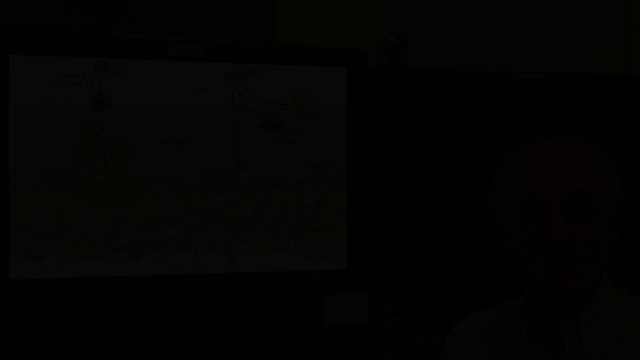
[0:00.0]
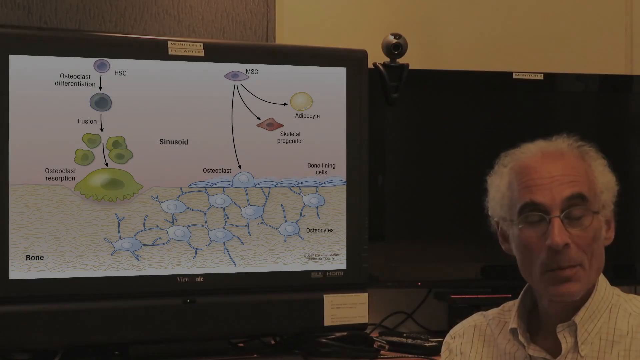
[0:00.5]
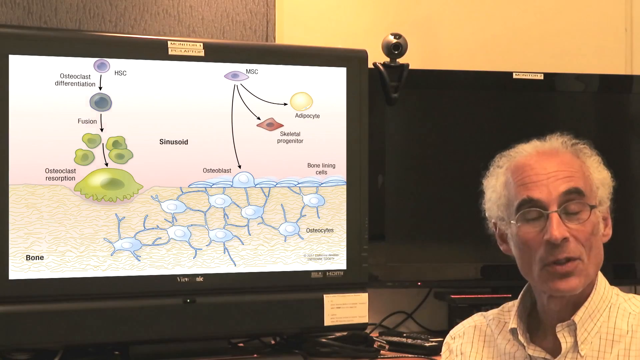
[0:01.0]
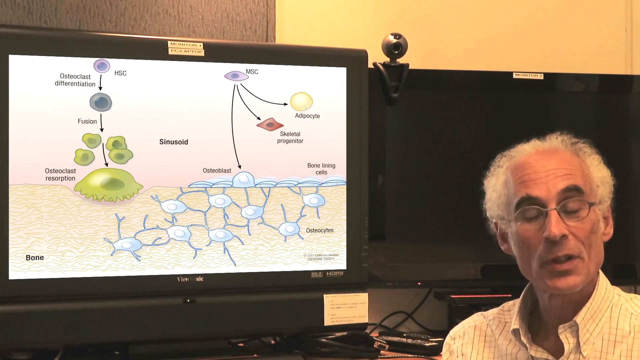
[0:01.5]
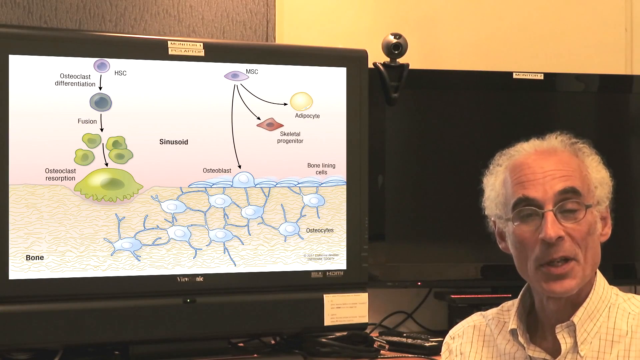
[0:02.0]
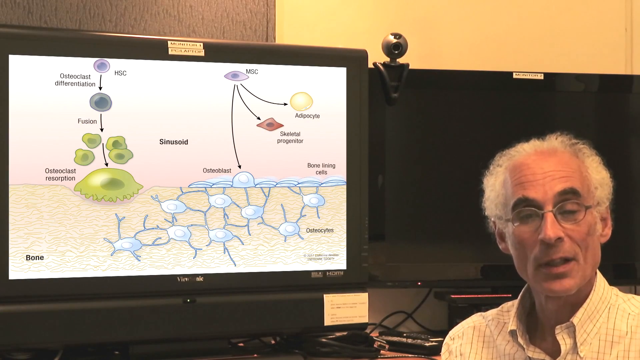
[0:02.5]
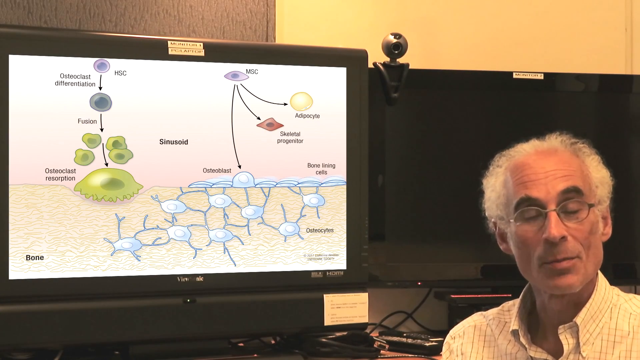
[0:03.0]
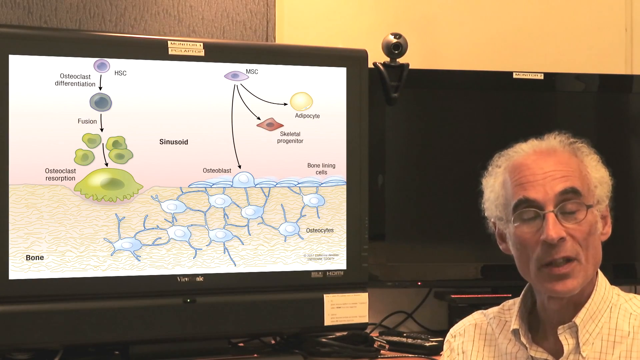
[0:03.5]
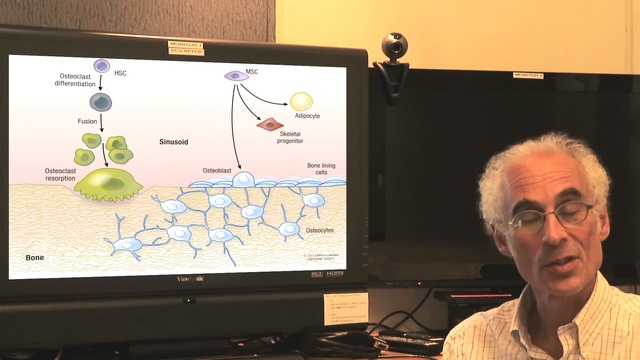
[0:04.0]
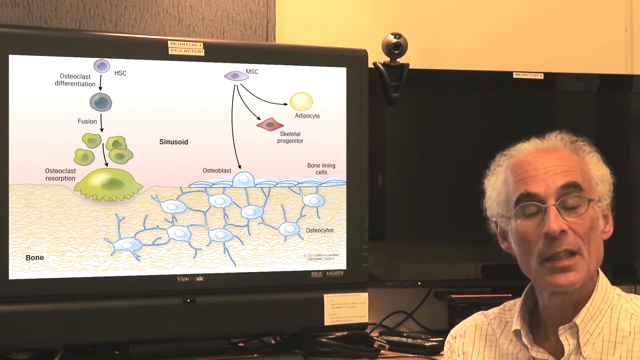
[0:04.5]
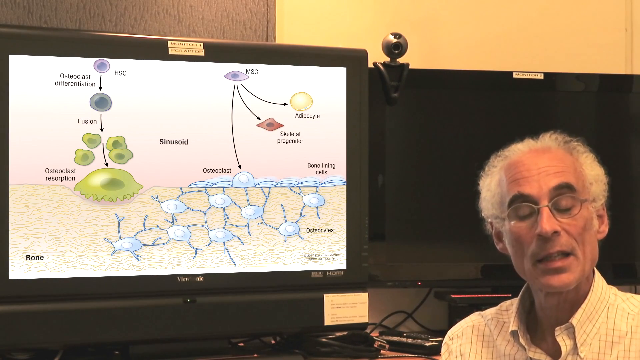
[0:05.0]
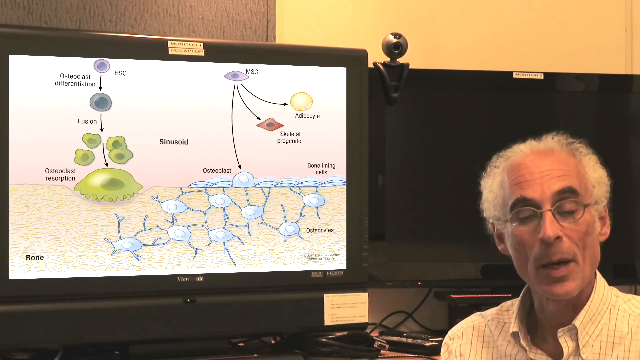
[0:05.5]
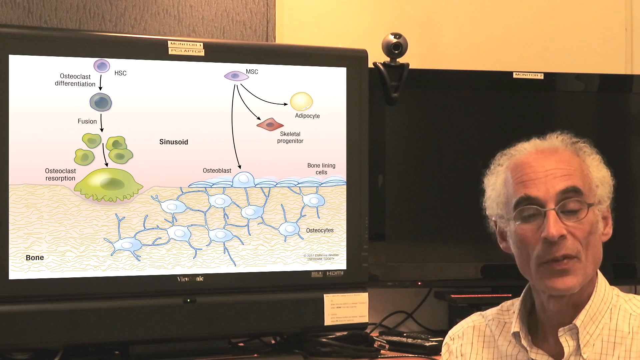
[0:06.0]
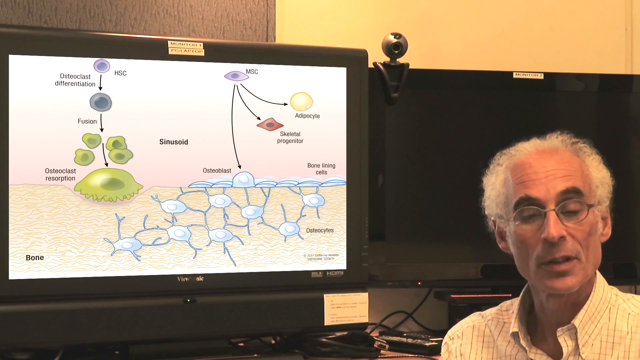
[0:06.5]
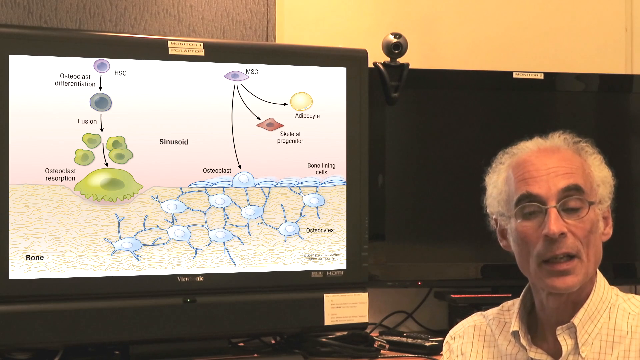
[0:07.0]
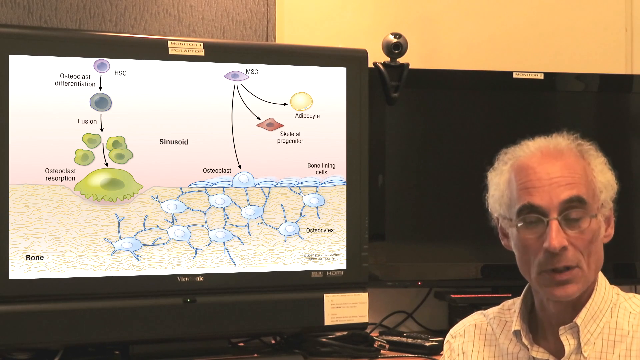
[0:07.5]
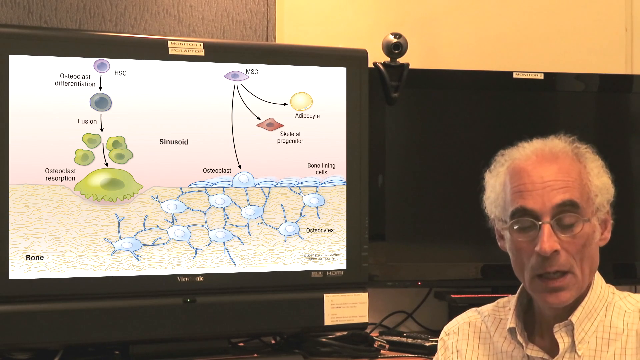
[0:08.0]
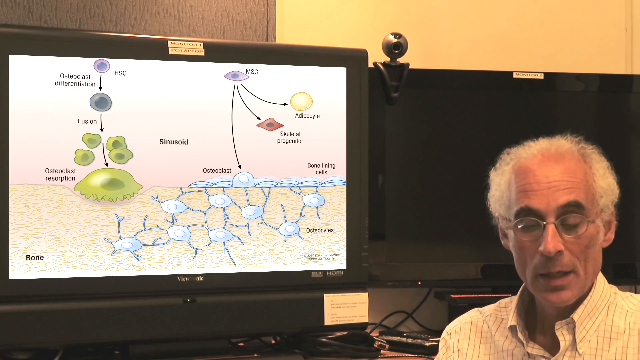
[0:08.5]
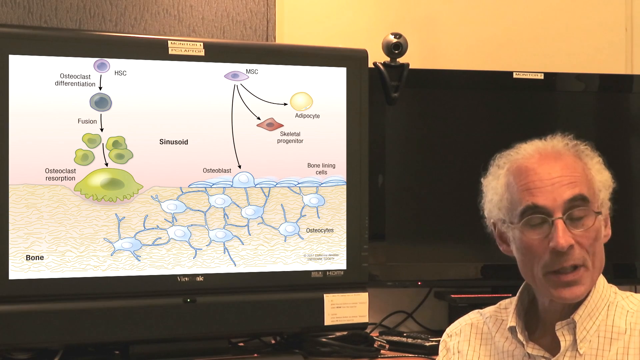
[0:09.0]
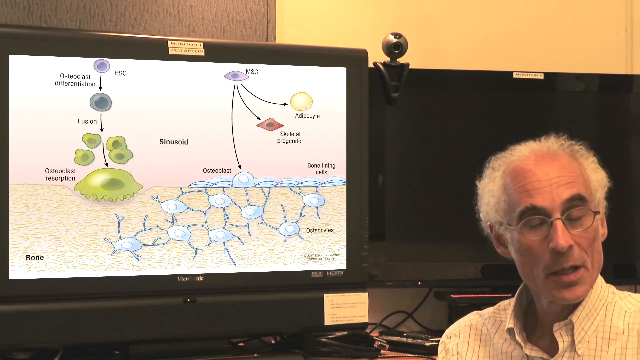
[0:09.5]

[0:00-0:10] A man, approximately in his late 60s, with gray hair that is partially bald on top and rather long and curly on the sides, is standing in what looks like a classroom. A computer monitor on his left shows an illustration: a close-up view of what might be the bone or inner skin of a human. Starting on the left, it says "bone" in a light mix of yellow and white, with what look like little cells called osteocytes below the skin. On the left, from the top down, "HSC" appears in a small circle, an arrow points downward to "osteoclast differentiation", and a further arrow shows a "fusion" with four small cell-like images, resulting in an "osteoclast resorption", a green mass that sits half inside what looks like the layer of skin or bone. Off to the right side, the man looks at the camera as he speaks. Only his collared plaid shirt is visible, with no tie; he wears framed glasses and has rather thick, bushy eyebrows and fair skin.